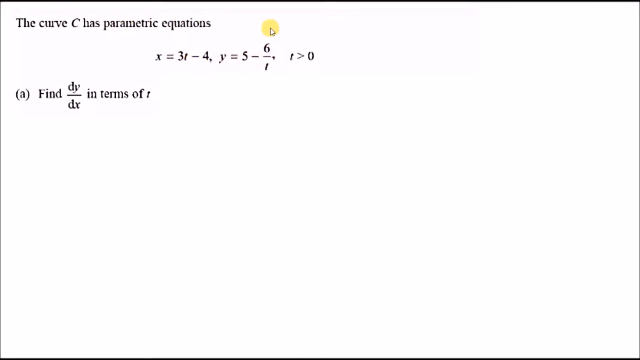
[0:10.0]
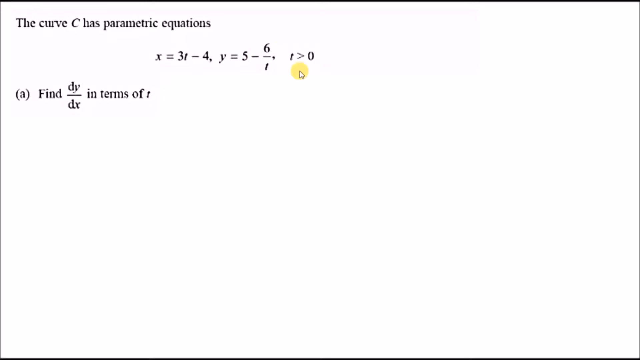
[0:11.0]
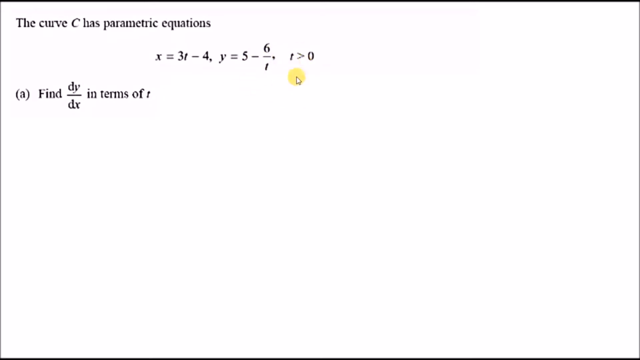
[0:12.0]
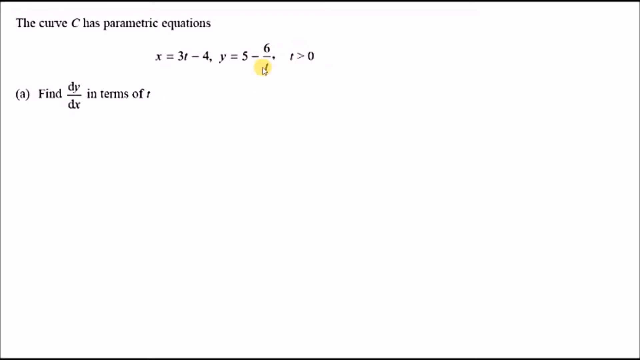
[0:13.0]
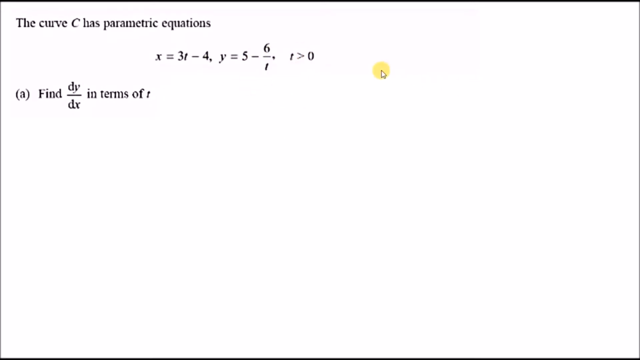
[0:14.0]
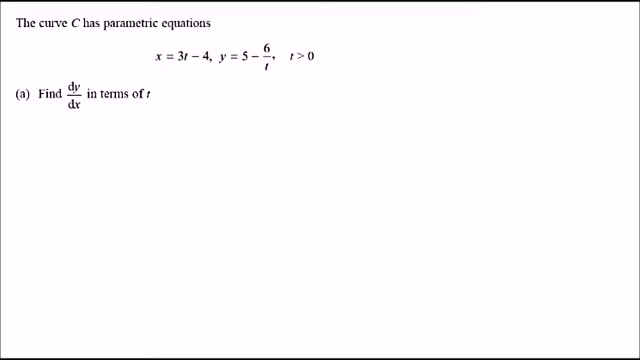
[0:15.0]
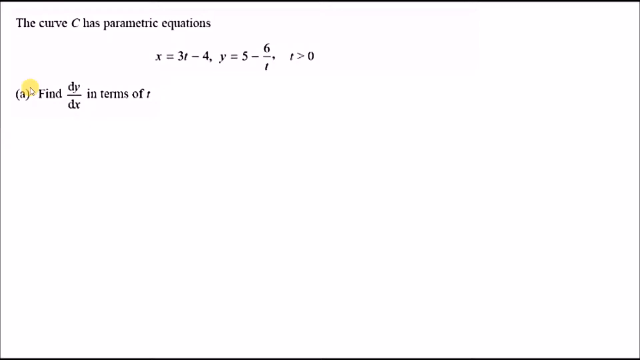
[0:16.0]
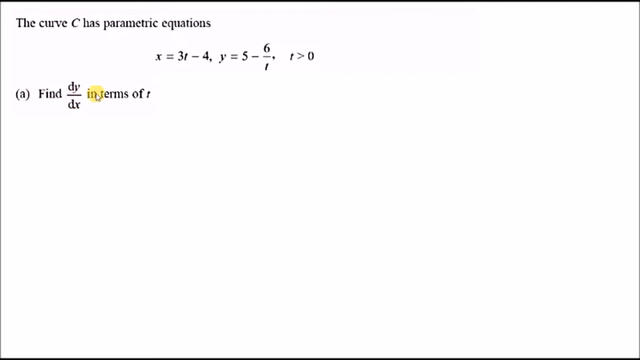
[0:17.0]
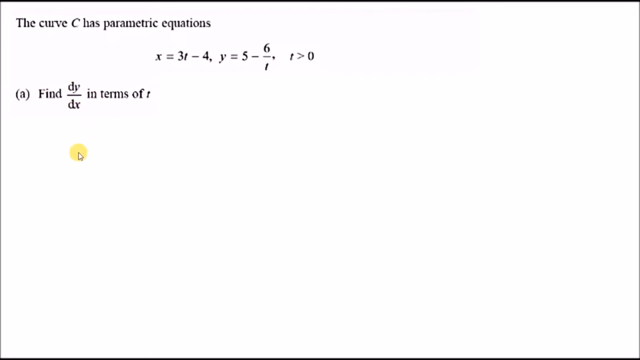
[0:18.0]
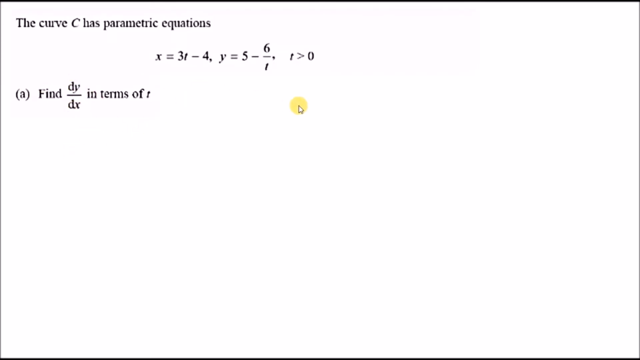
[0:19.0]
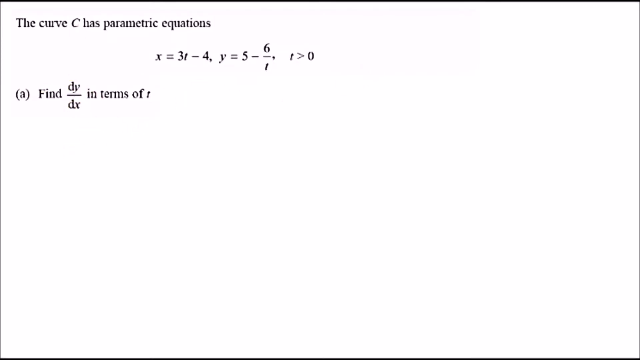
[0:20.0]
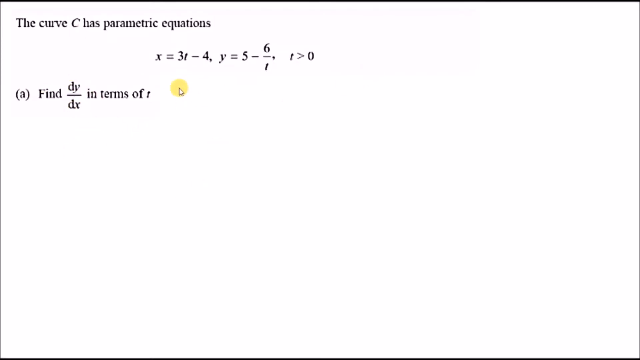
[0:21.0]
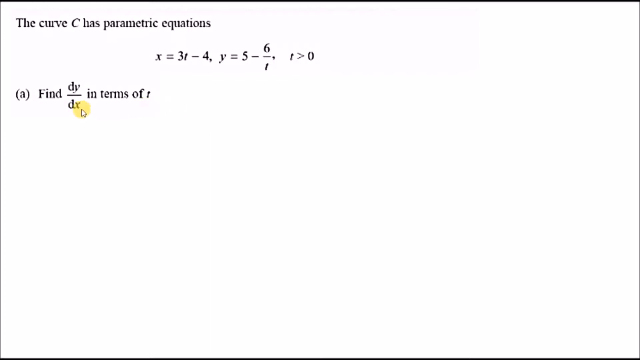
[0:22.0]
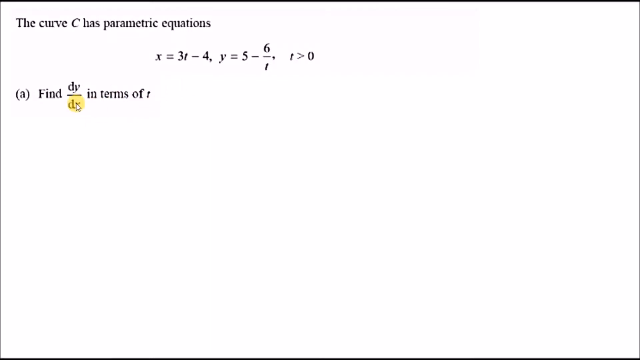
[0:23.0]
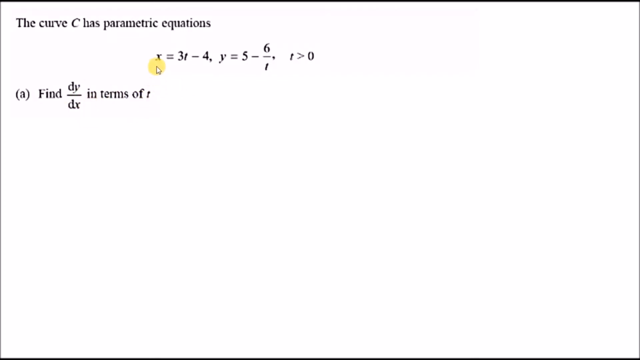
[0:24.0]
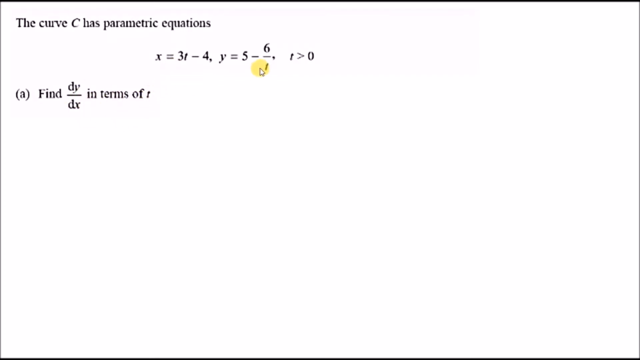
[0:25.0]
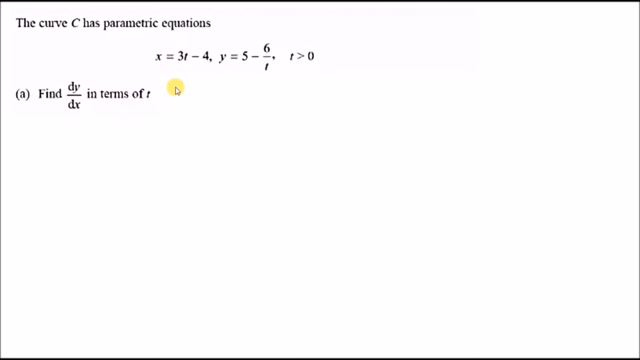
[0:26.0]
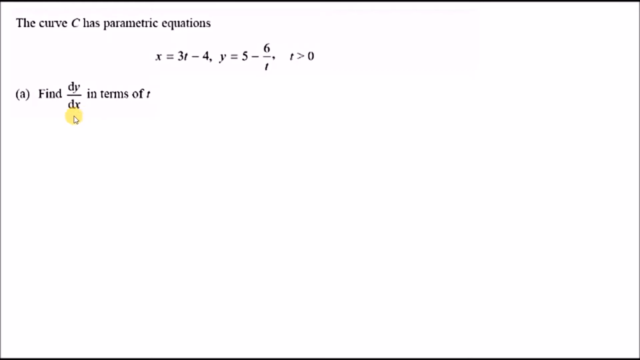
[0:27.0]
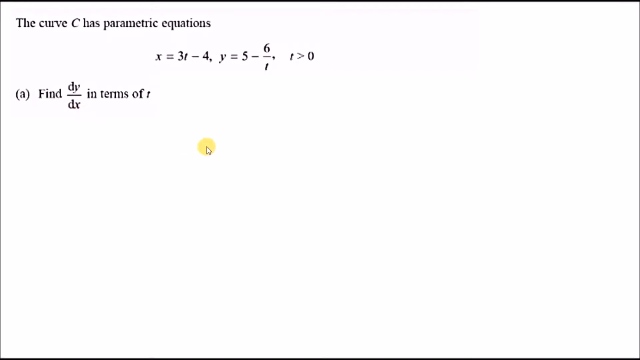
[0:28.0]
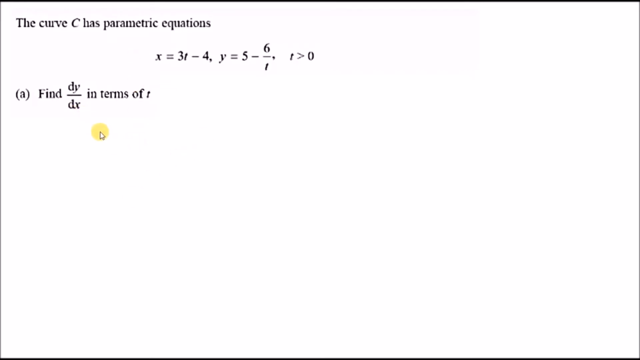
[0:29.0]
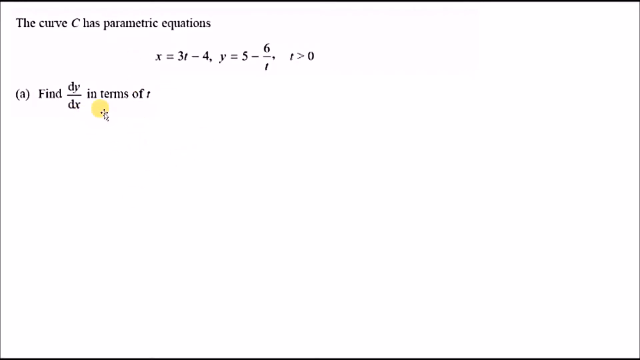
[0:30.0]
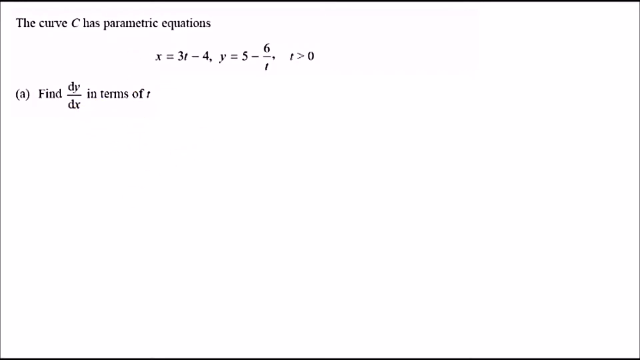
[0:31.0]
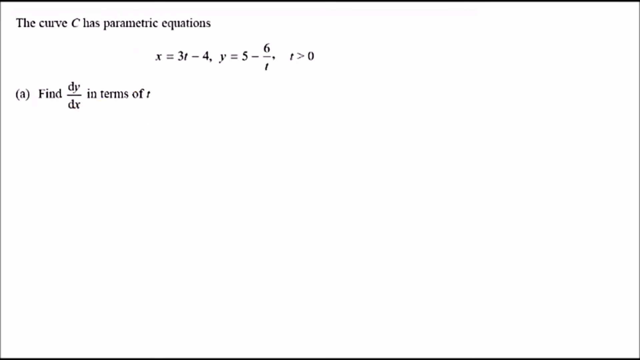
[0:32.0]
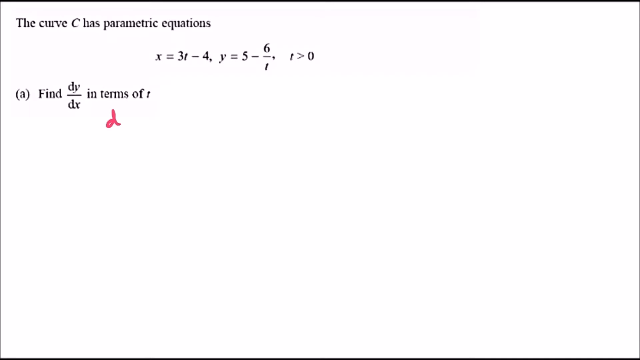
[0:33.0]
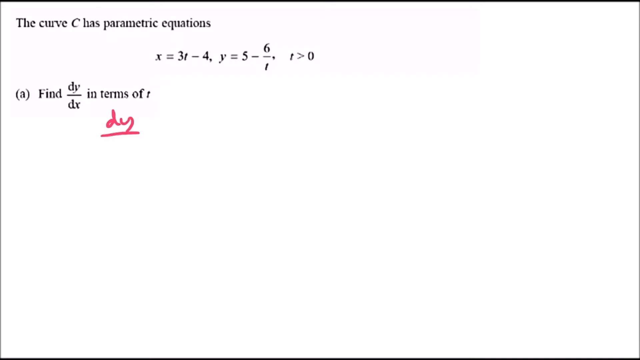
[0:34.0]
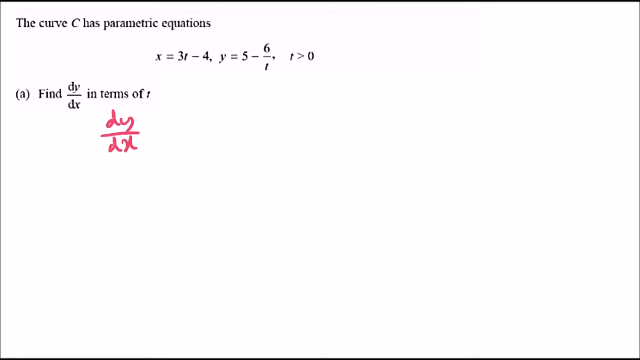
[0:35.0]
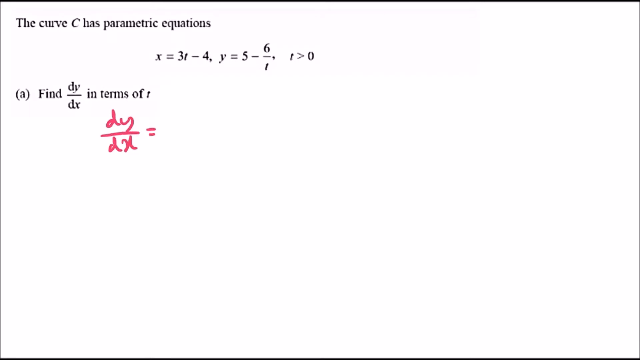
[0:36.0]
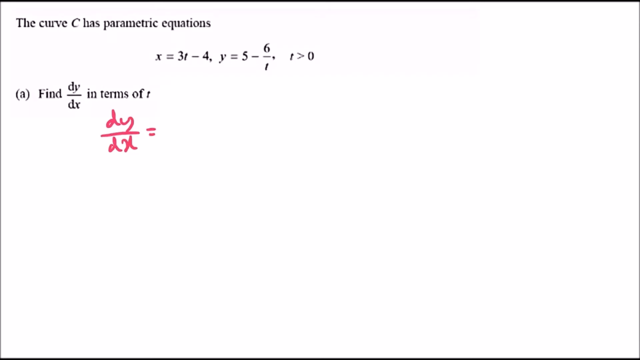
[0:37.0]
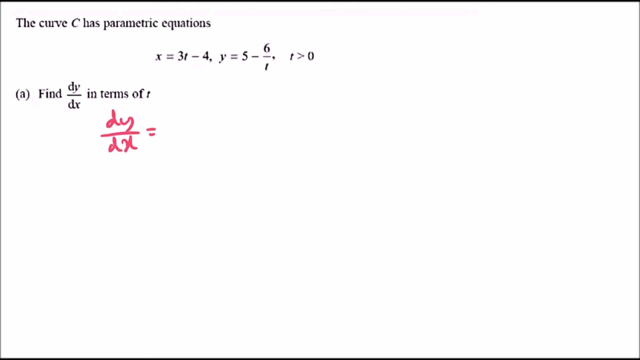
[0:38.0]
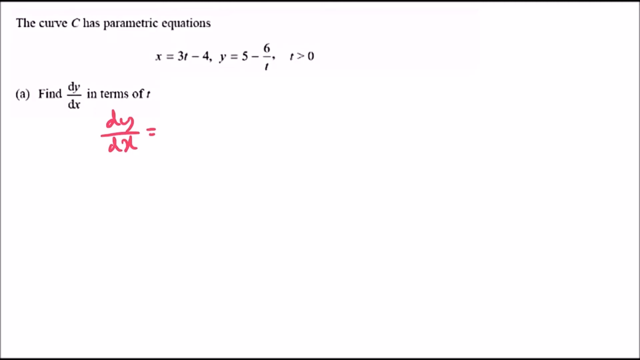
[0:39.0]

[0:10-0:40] On a white screen, a math problem in black text asks to find dy over dx in terms of t. It provides the curve C along with listed parametric equations. The cursor circles various parts of the parametric equations, moves off screen briefly, then circles dy over dx in the question. It moves between parts of the parametric equations and the question about finding dy over dx, seemingly showing a correlation between them. Writing in pink marker begins in the empty white space: dy over dx followed by an equals sign.